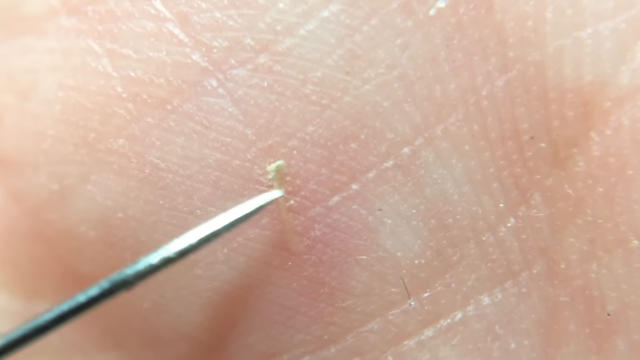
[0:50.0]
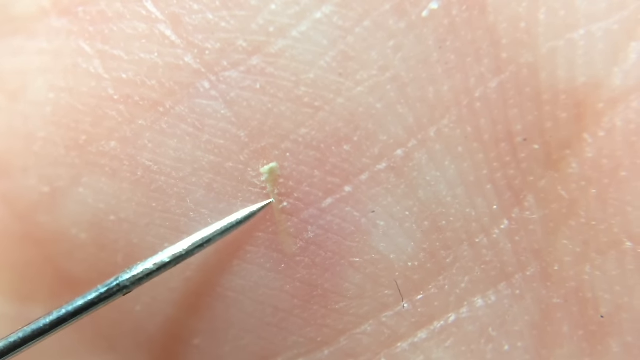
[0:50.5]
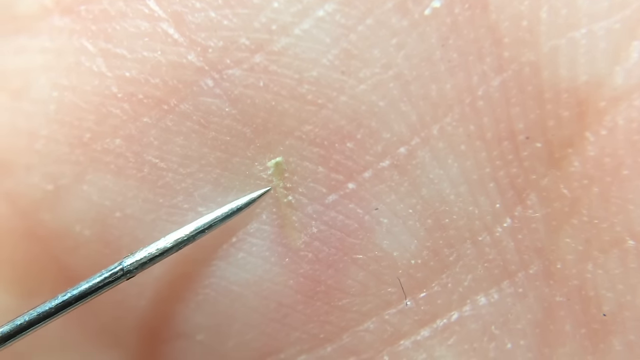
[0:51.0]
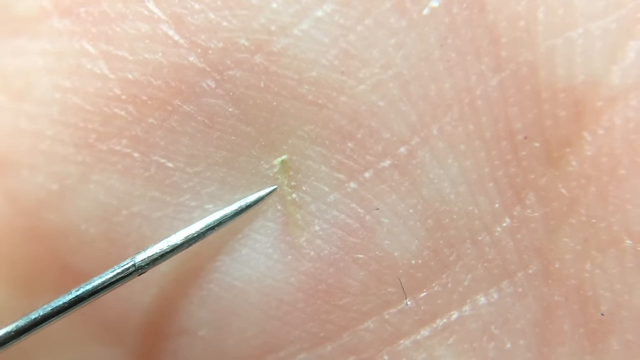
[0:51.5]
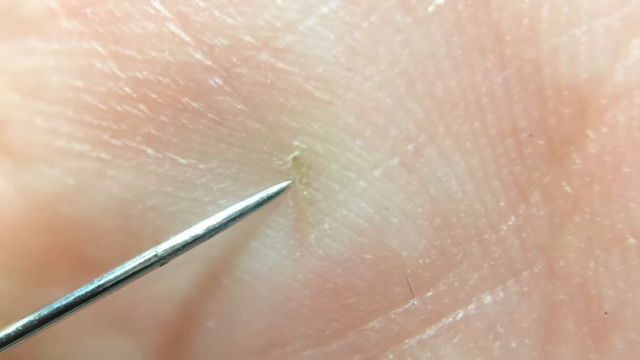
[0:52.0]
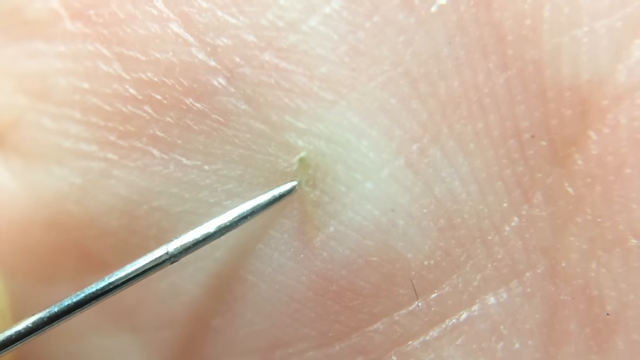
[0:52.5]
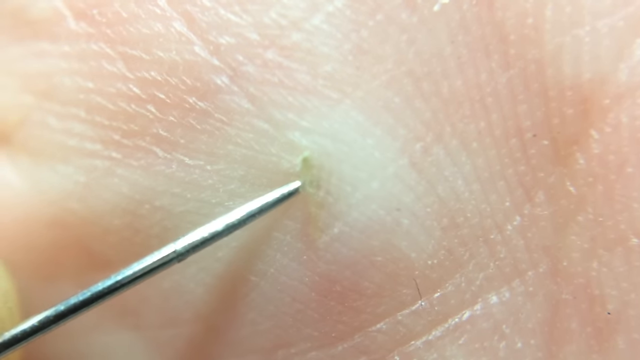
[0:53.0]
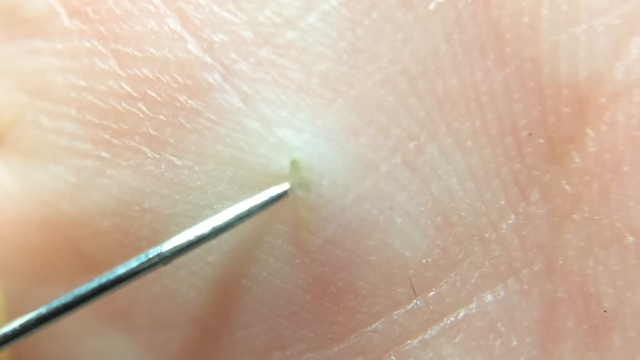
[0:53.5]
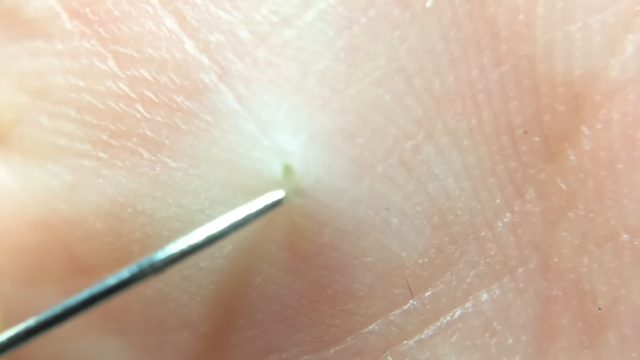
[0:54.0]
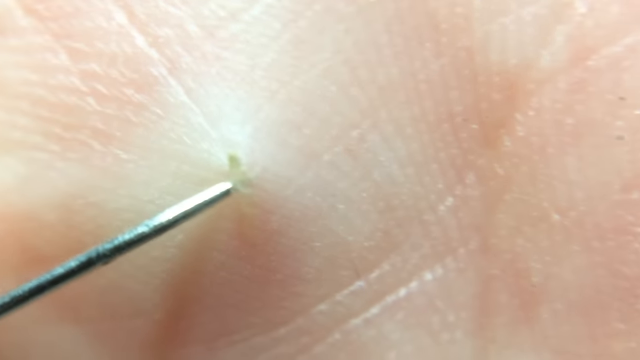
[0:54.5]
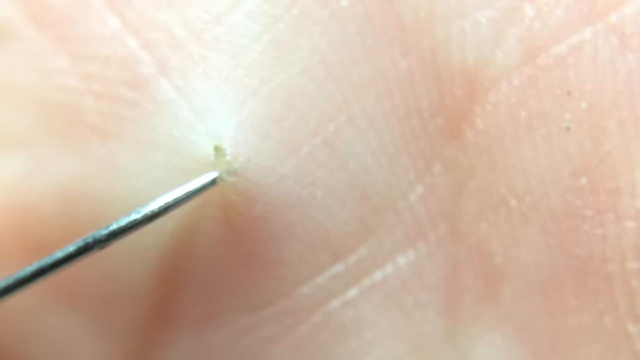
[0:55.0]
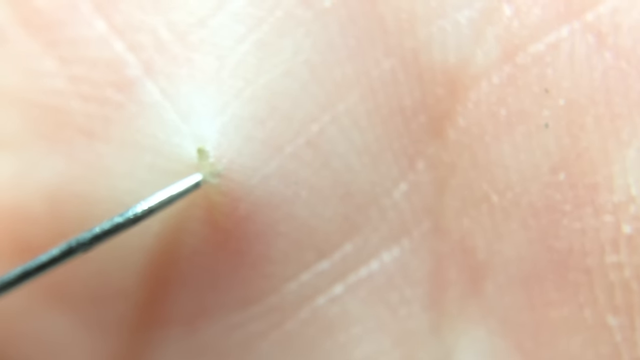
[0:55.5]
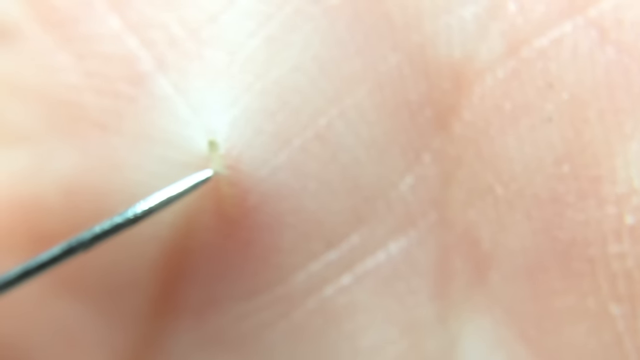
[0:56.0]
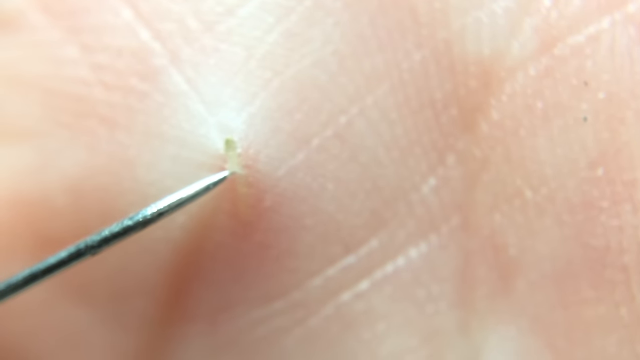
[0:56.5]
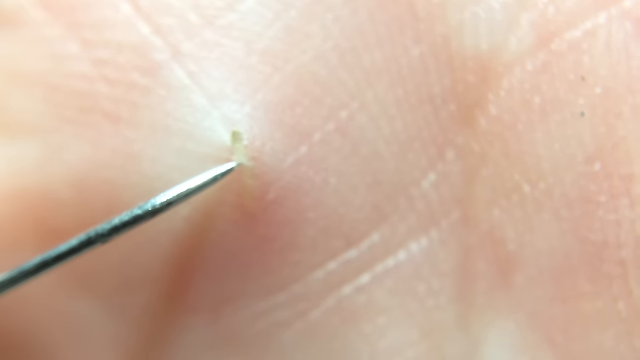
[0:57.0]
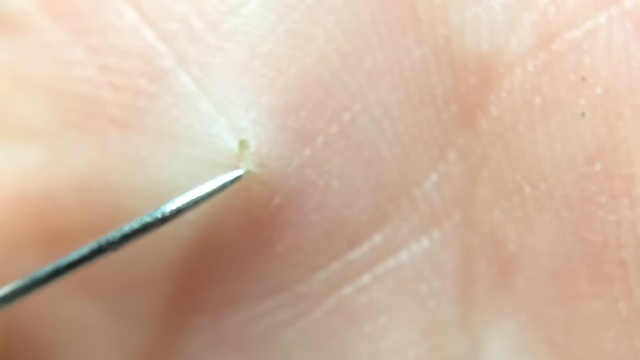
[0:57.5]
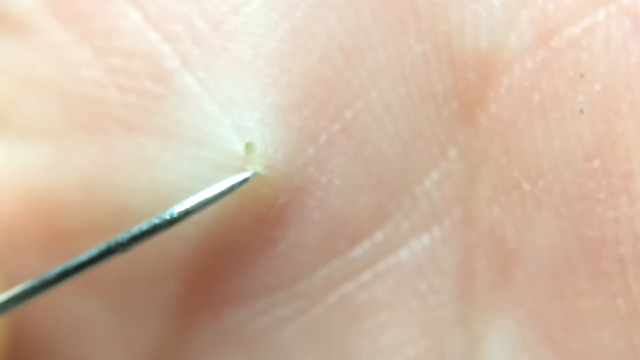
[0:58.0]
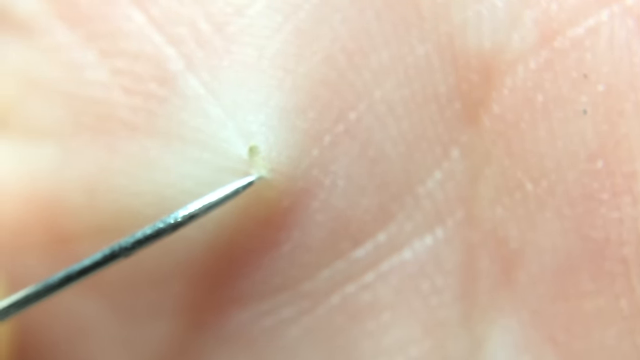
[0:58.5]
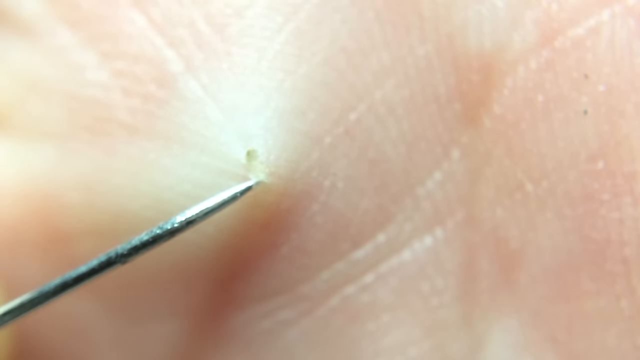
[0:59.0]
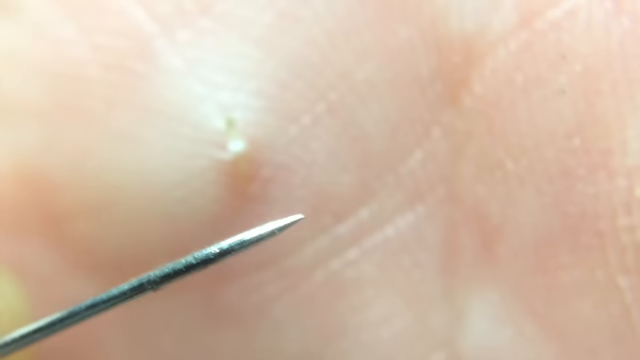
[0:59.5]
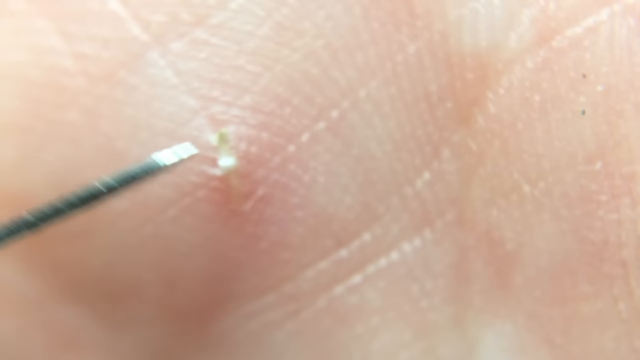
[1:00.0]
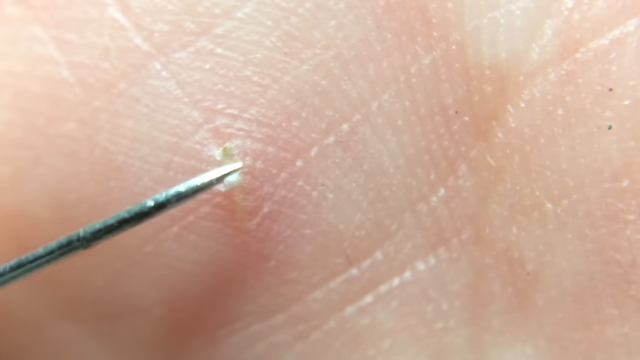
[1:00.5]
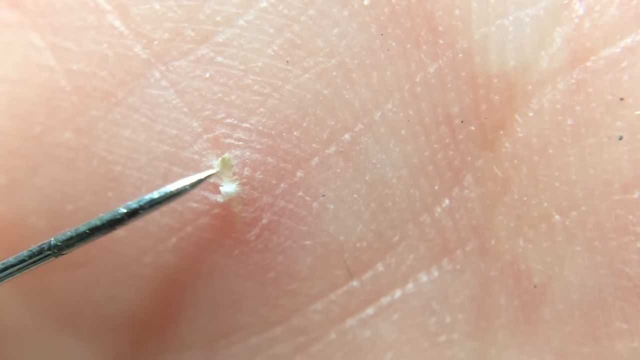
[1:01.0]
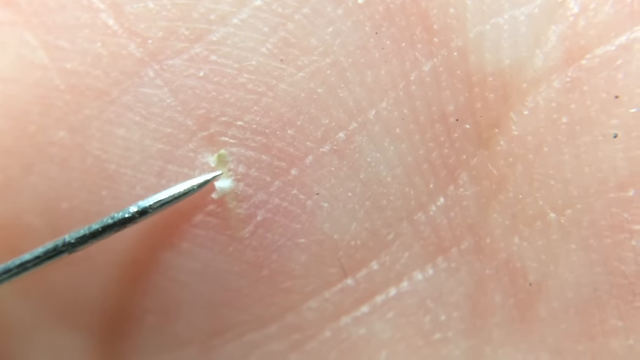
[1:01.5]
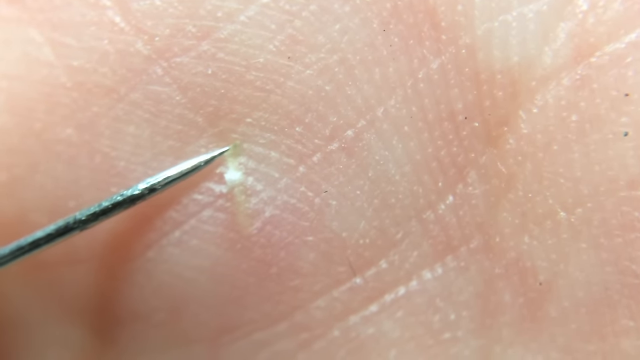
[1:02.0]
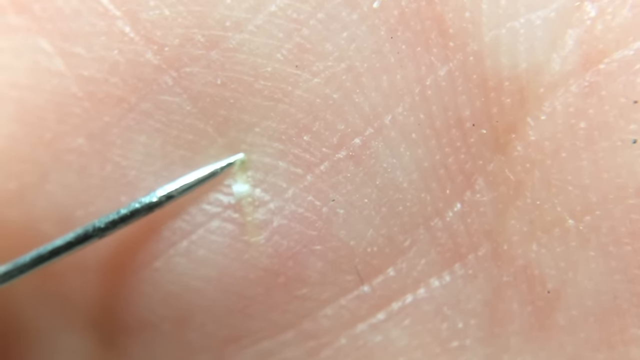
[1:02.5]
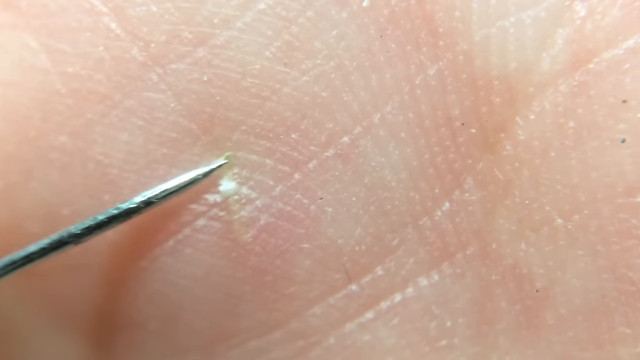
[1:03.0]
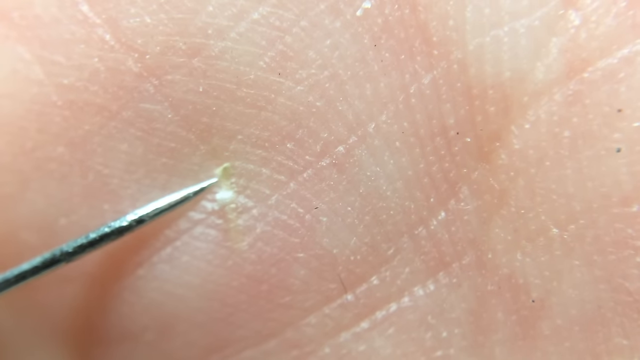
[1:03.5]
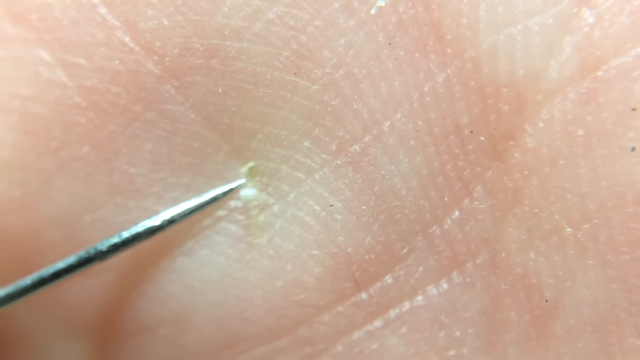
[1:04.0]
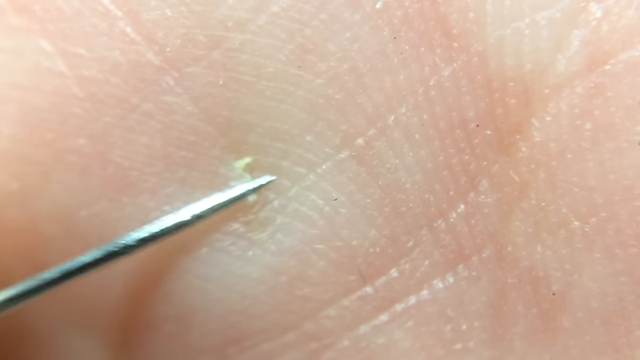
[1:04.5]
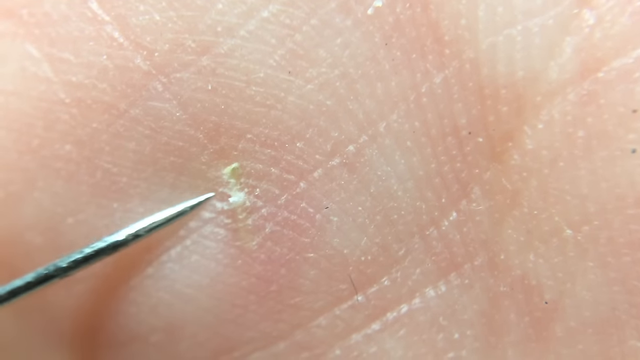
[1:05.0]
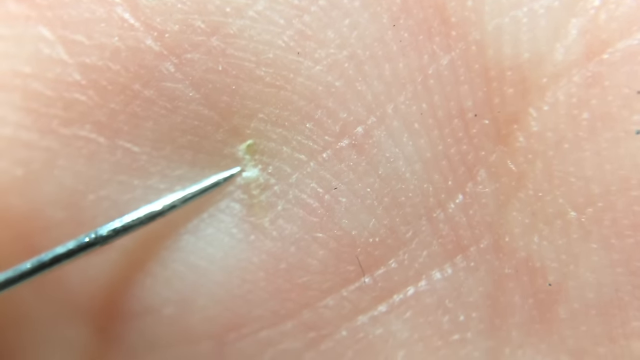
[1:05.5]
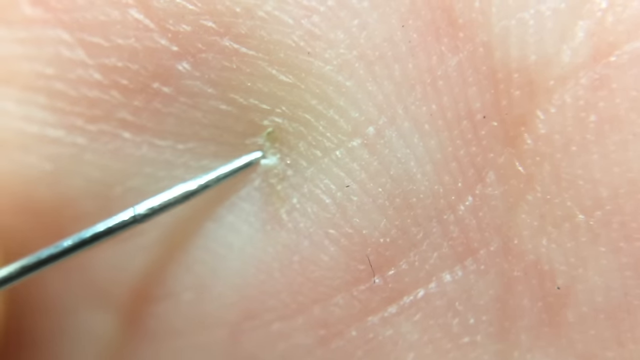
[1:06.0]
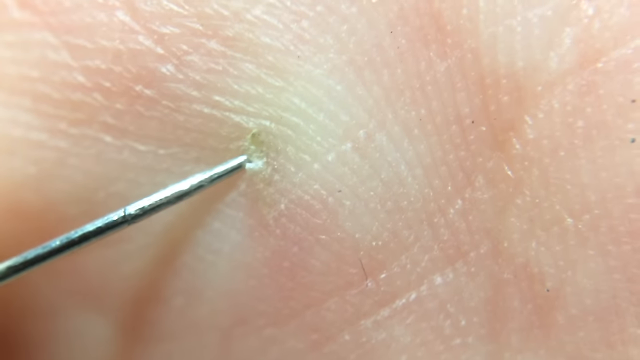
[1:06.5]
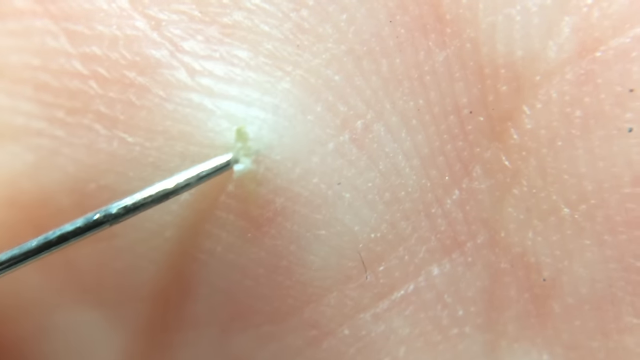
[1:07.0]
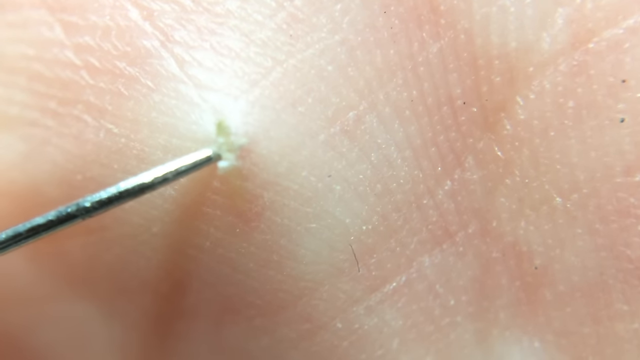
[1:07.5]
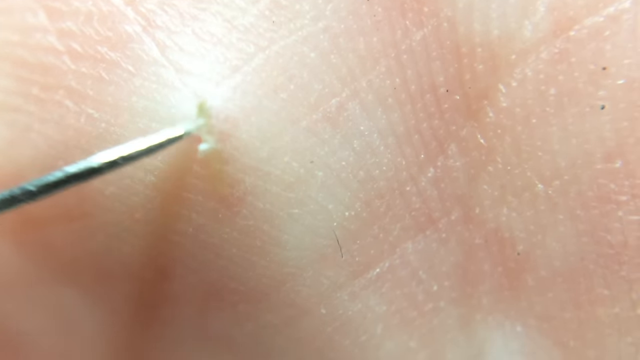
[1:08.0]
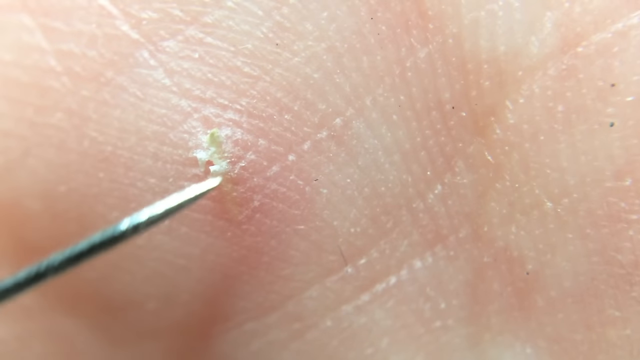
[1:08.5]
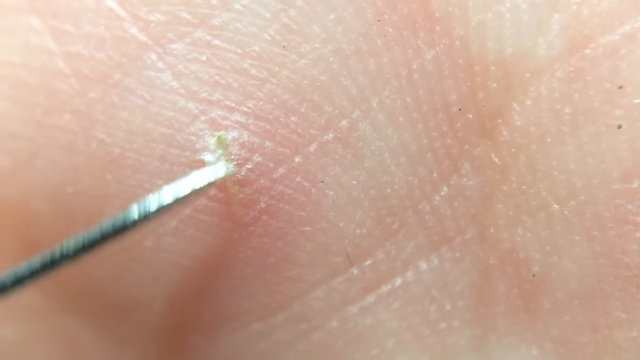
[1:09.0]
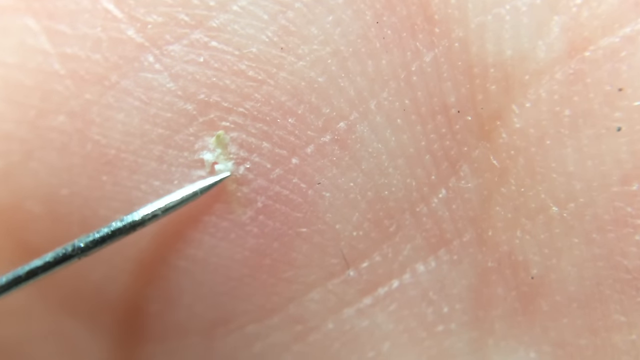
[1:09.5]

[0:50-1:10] A very zoomed-in close-up shows the palm of someone's hand. A sharp metal needle comes in and touches a splinter in the palm. He pokes around the outside of the splinter, then gets the needle underneath the splinter under his skin and starts pulling the needle up, which pulls the splinter up a little so the part hanging out of the skin gets a little bigger. He keeps poking at different places along the splinter, working along its whole length under the skin: he puts the needle under one part of the skin, pulls up, pulls the needle out, then puts it under another part and pulls up, trying to work the splinter out of his palm.